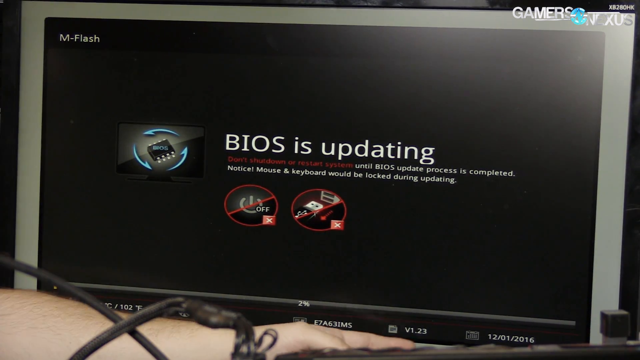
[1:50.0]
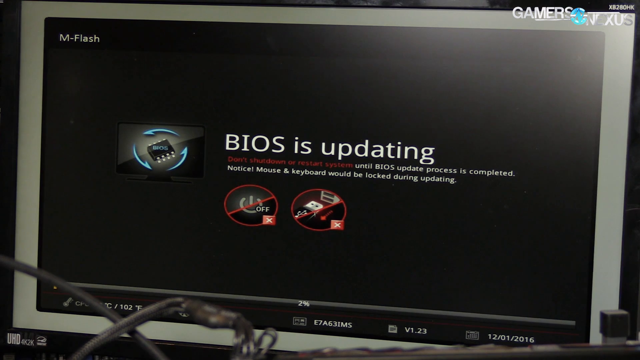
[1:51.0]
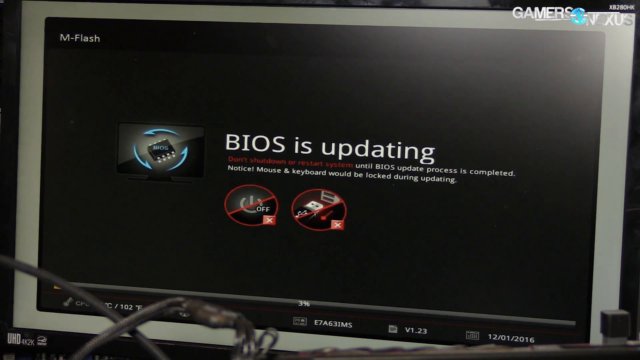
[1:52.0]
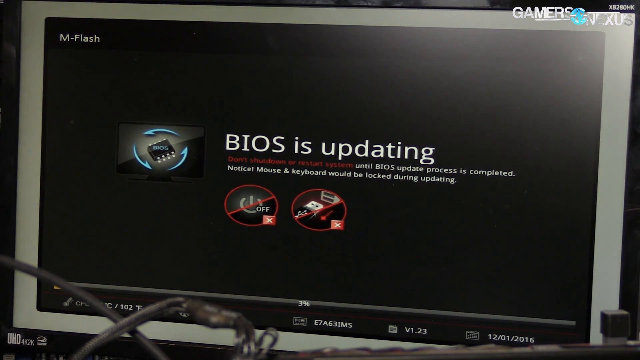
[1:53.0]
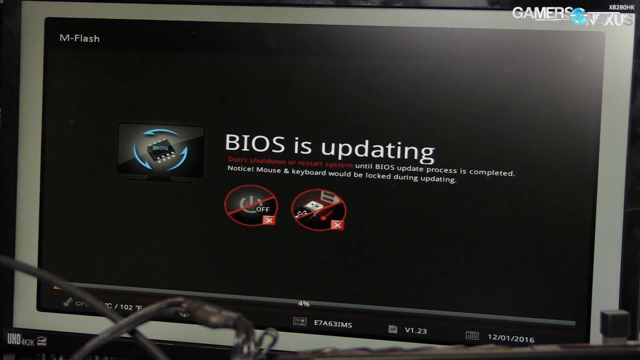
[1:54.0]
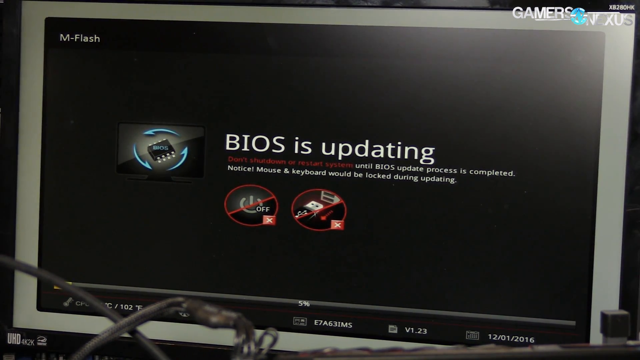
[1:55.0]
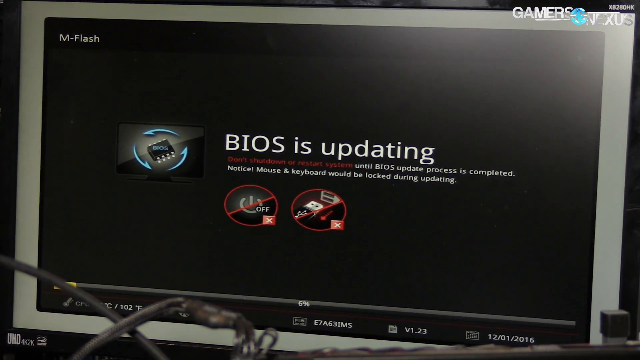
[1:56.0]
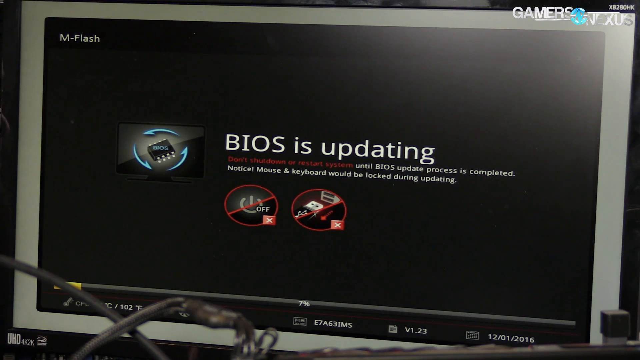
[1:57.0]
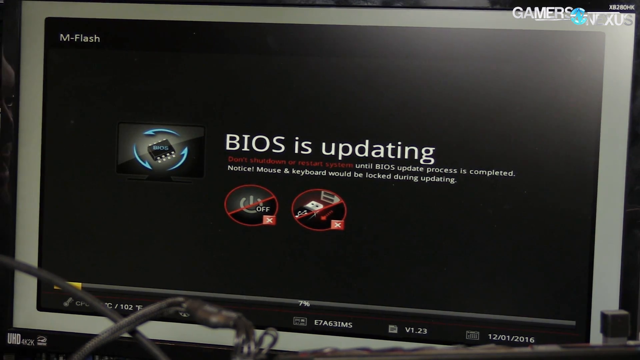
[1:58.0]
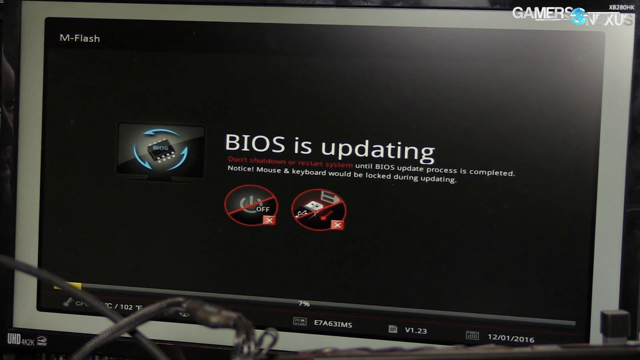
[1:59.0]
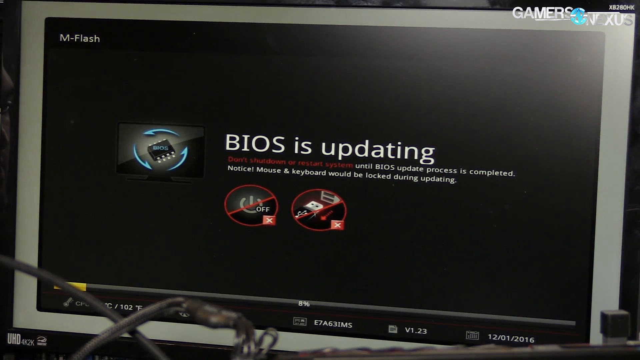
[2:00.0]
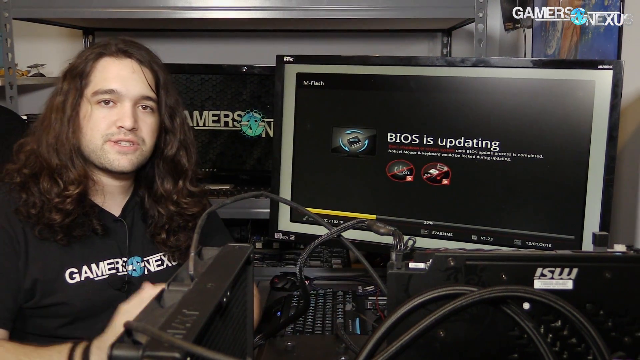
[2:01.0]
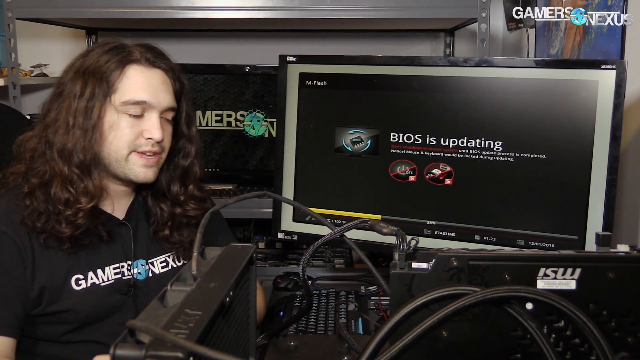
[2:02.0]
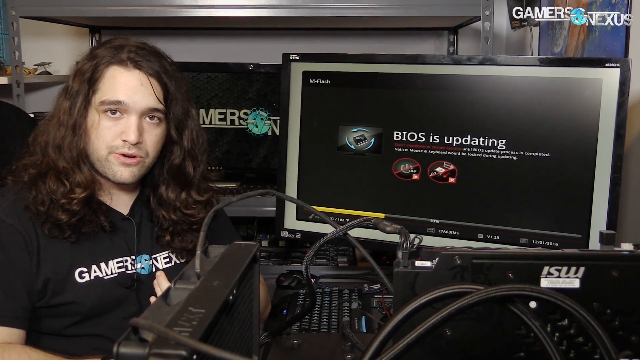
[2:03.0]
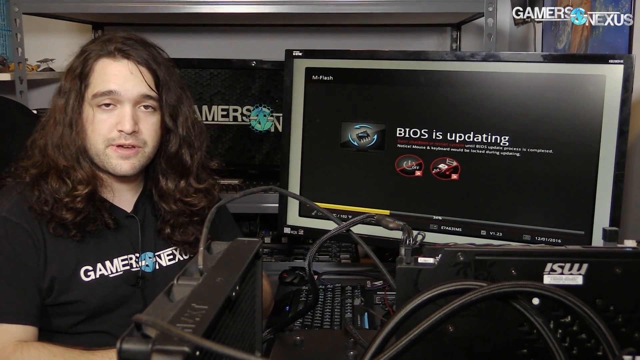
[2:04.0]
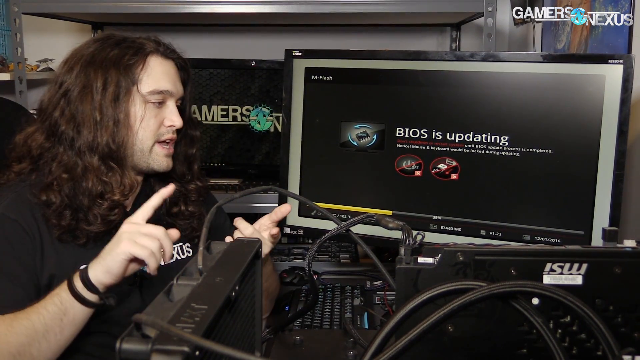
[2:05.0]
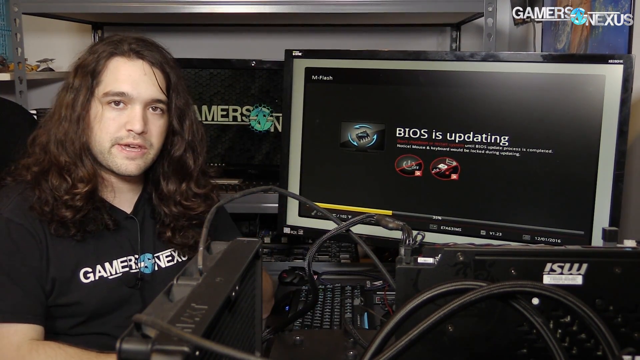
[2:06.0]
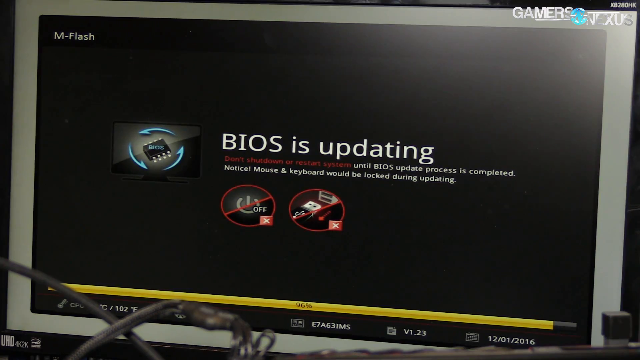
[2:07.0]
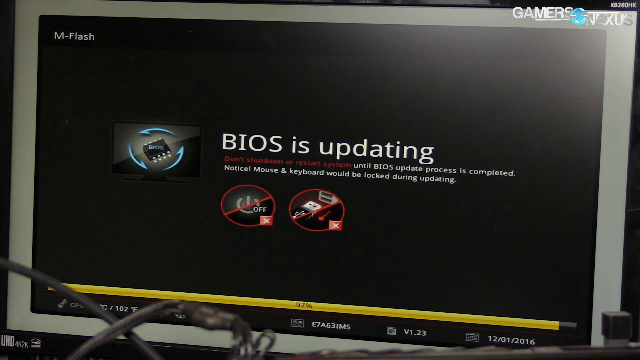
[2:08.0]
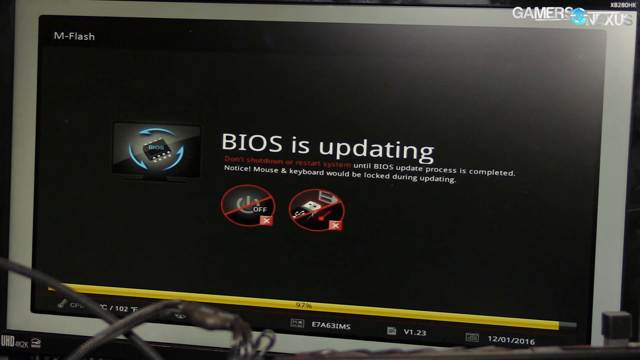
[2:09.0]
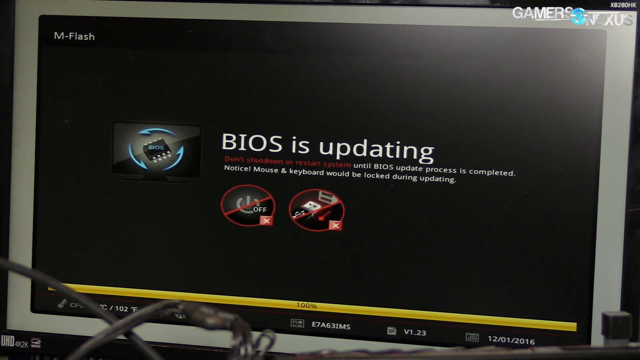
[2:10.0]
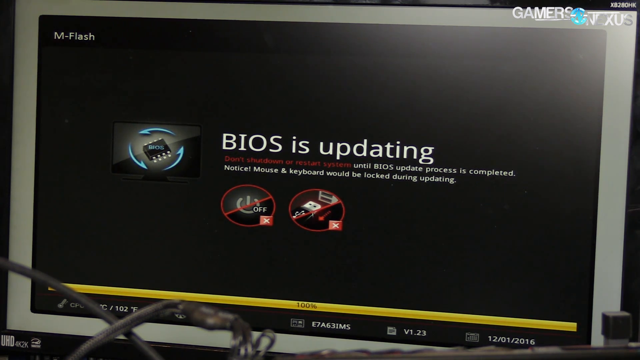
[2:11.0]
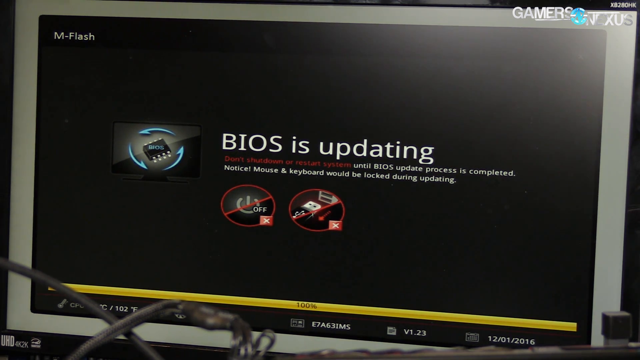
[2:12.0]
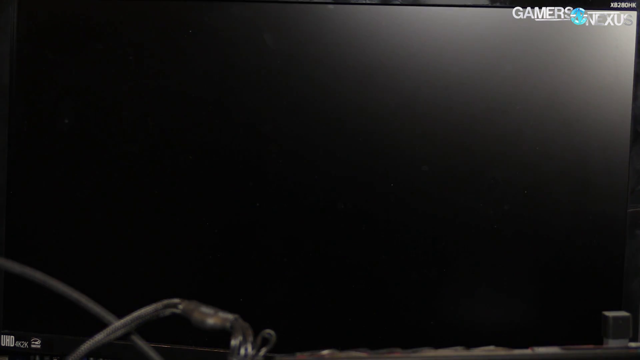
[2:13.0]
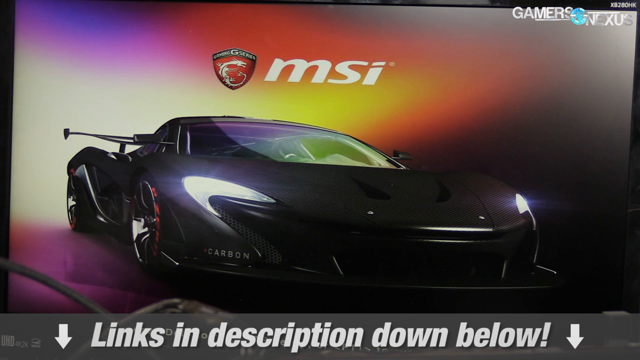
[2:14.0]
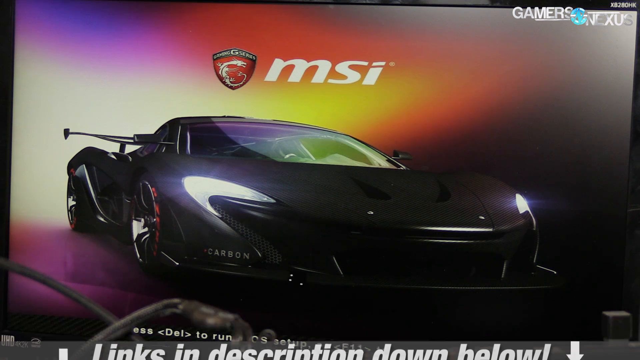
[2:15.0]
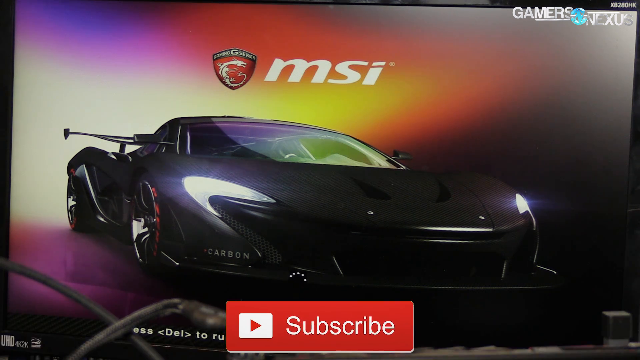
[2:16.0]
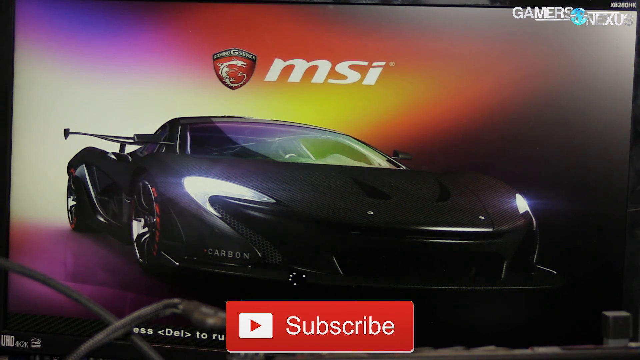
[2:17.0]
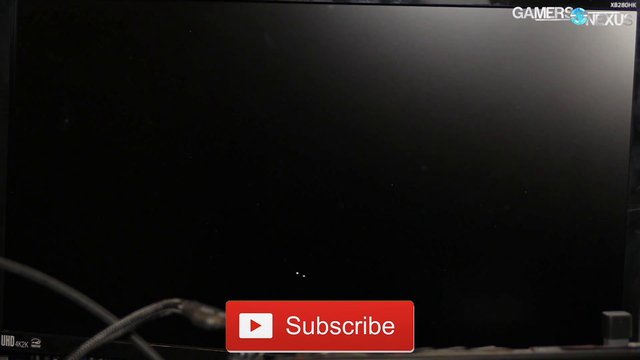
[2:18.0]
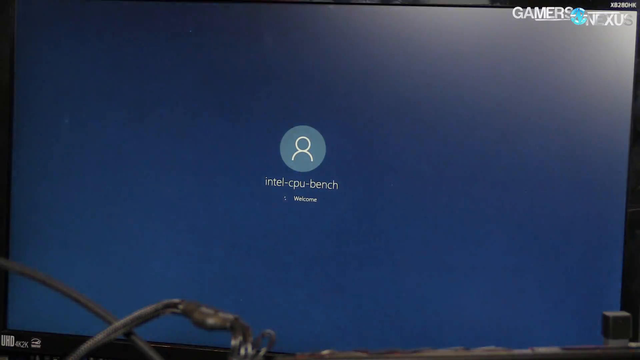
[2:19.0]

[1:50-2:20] In the top right corner of the screen it says "Gamer Nexus". The screen reads "mFlash" and "BIOS is updating. Don't shut down or restart system until BIOS update process is completed. Notice: mouse and keyboard will be locked during updating." A hand moves a little, and a date of 2016 is visible. The video then shows the man: a Caucasian, long-haired brunette man with "Gamer Nexus" on his shirt and a microphone attached to his shirt, talking to the camera and using his hands as he talks. It then returns to the screen saying the BIOS is updating. At the end something about "Intel CPU Bench" appears.